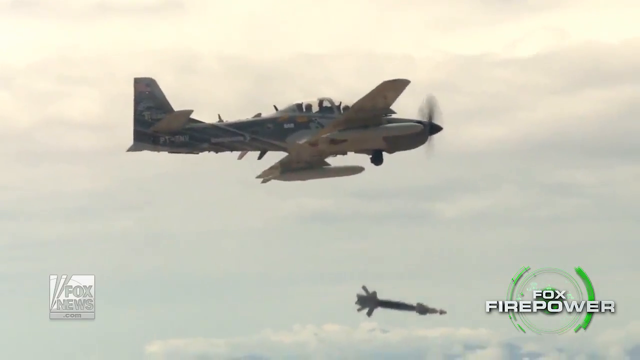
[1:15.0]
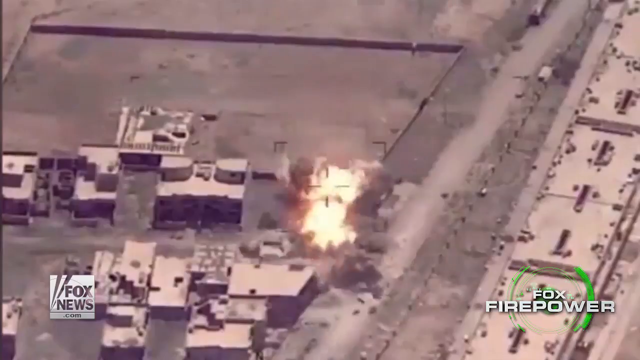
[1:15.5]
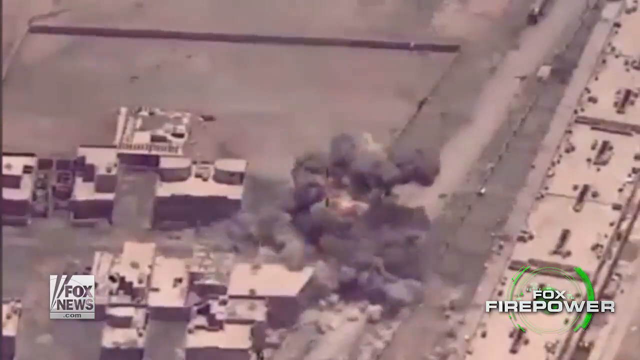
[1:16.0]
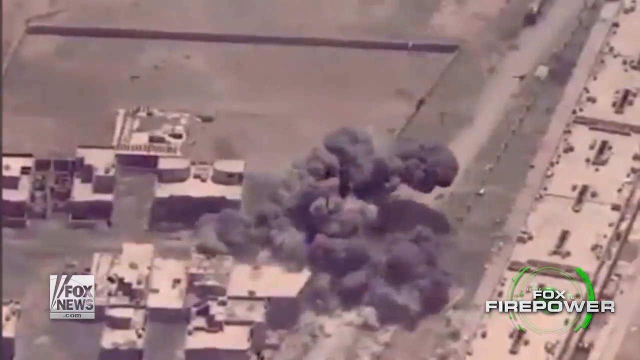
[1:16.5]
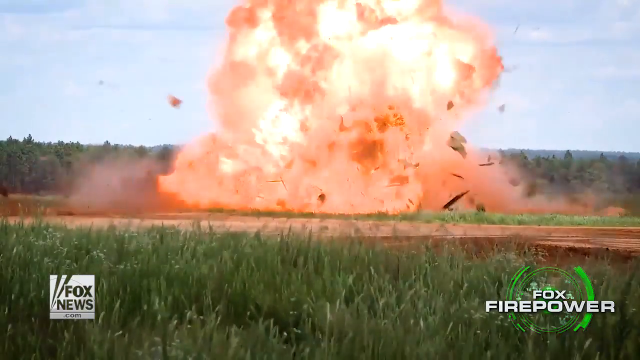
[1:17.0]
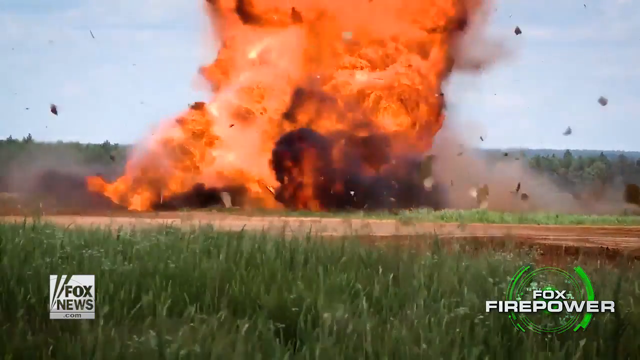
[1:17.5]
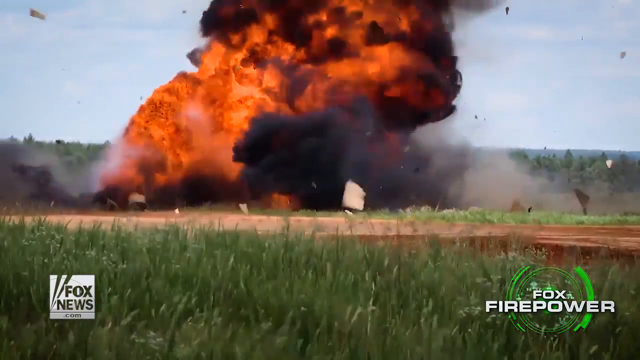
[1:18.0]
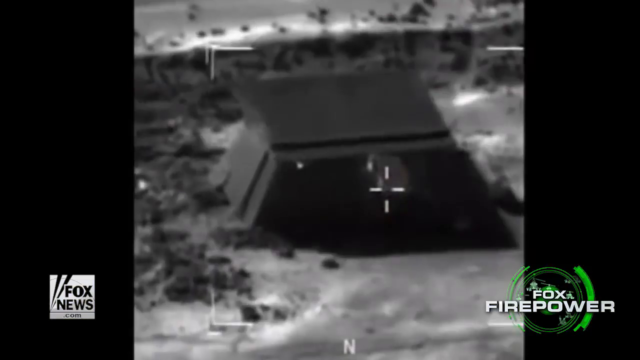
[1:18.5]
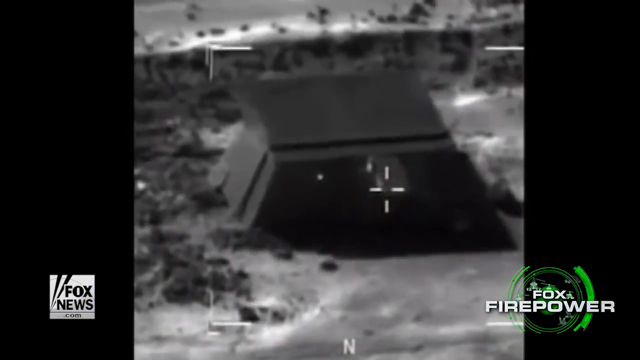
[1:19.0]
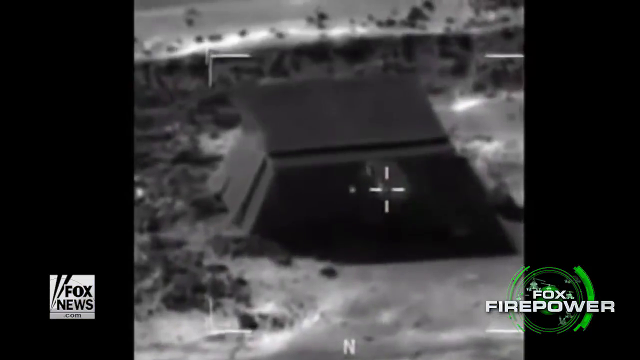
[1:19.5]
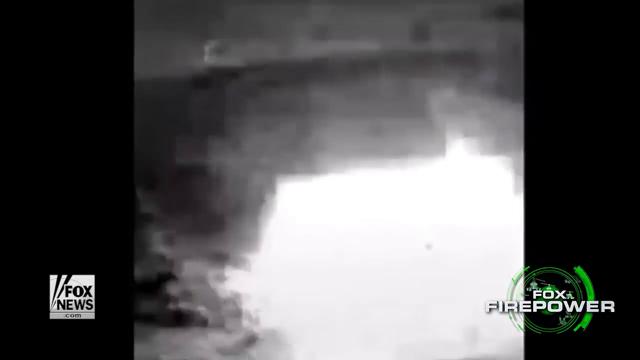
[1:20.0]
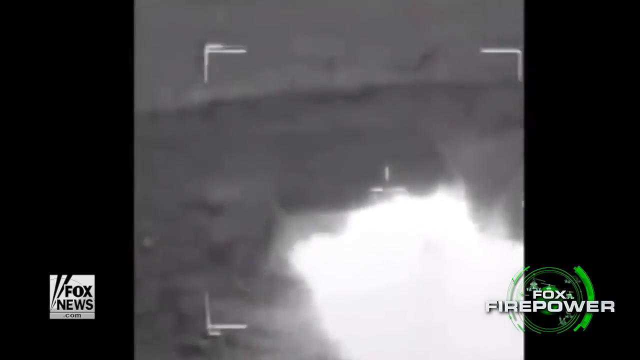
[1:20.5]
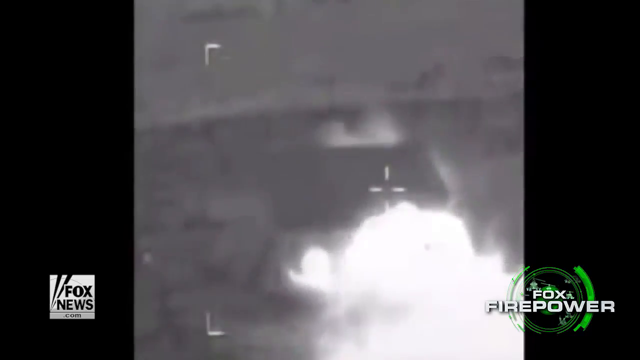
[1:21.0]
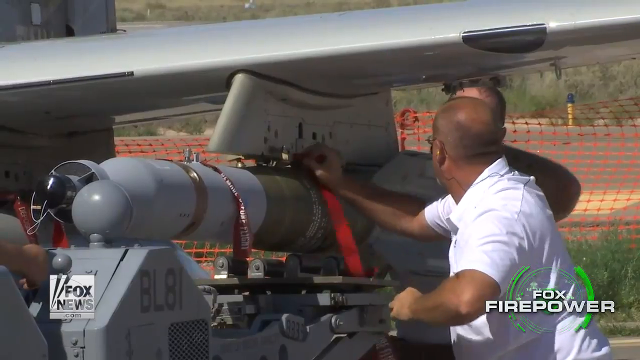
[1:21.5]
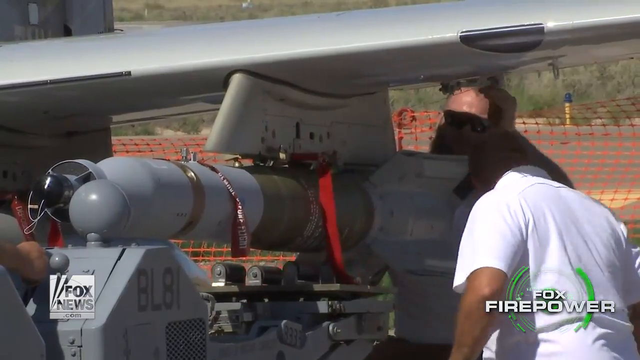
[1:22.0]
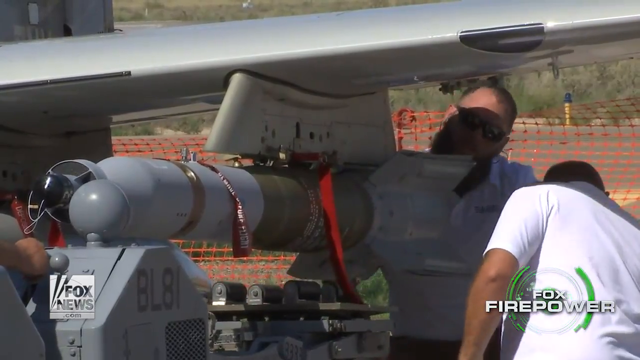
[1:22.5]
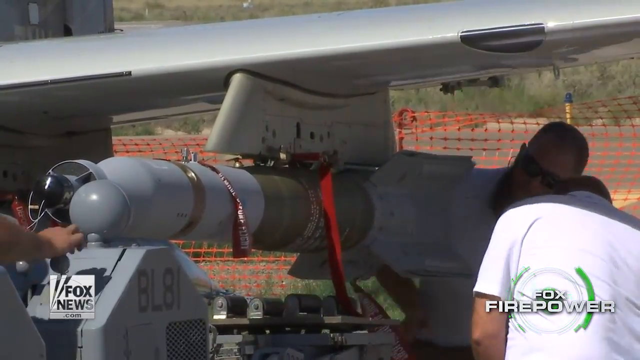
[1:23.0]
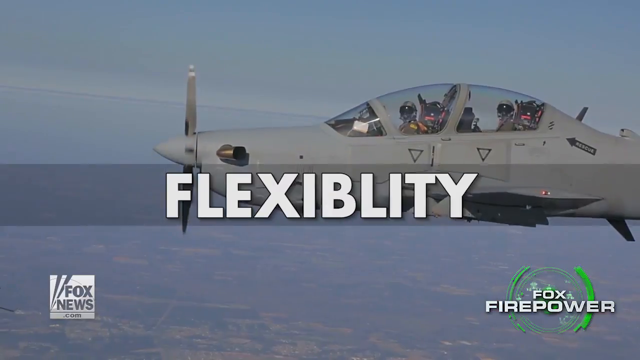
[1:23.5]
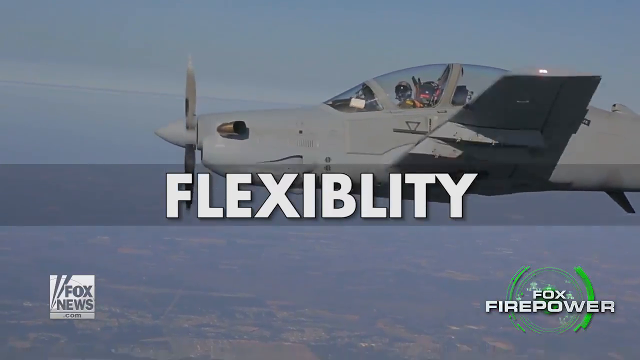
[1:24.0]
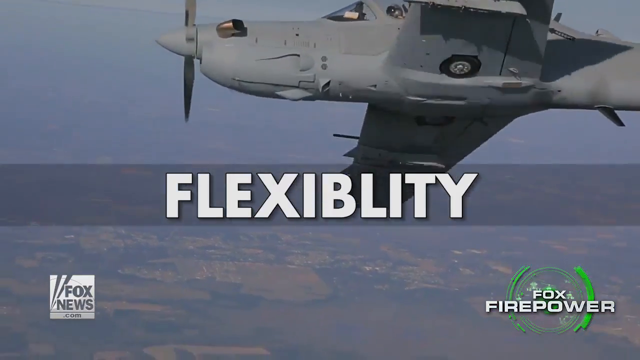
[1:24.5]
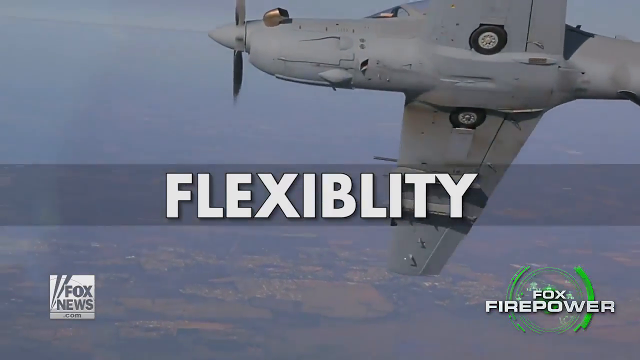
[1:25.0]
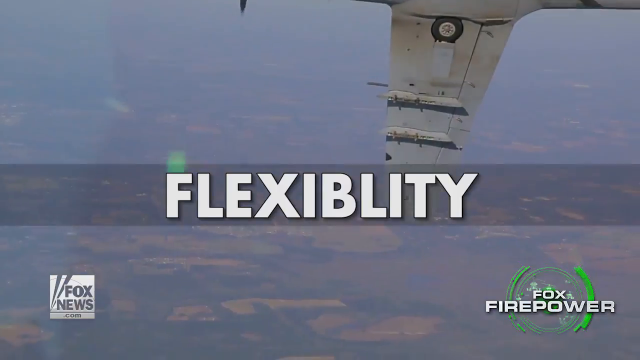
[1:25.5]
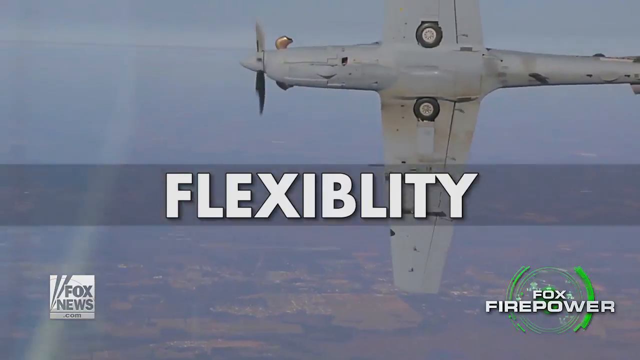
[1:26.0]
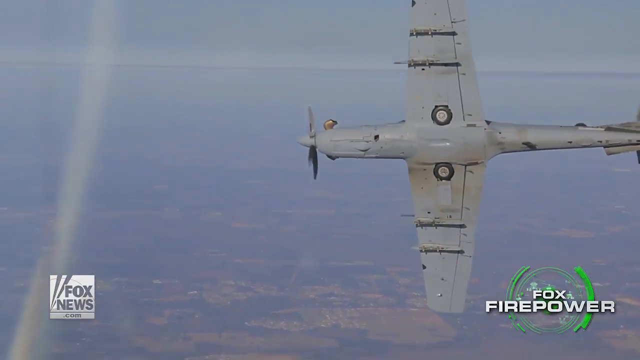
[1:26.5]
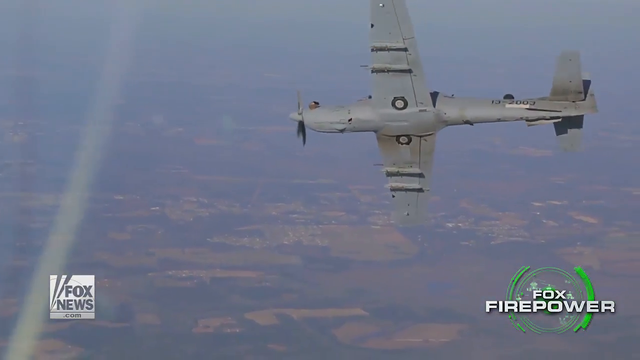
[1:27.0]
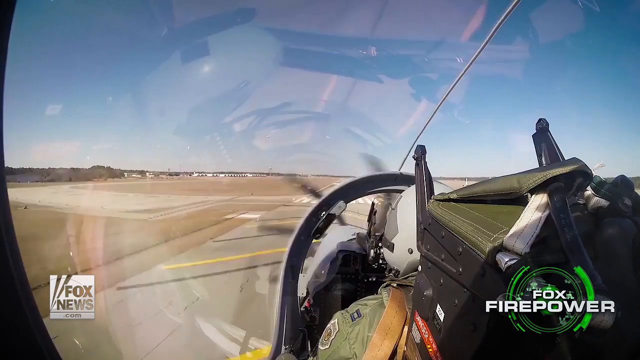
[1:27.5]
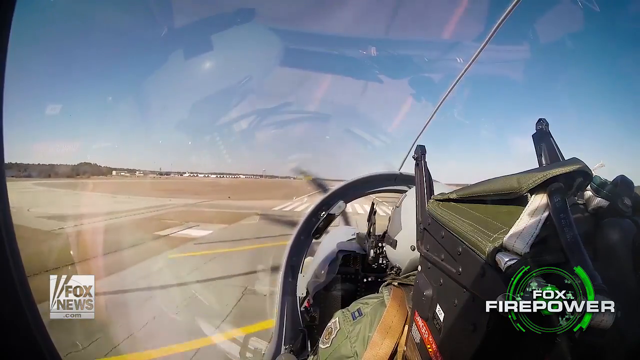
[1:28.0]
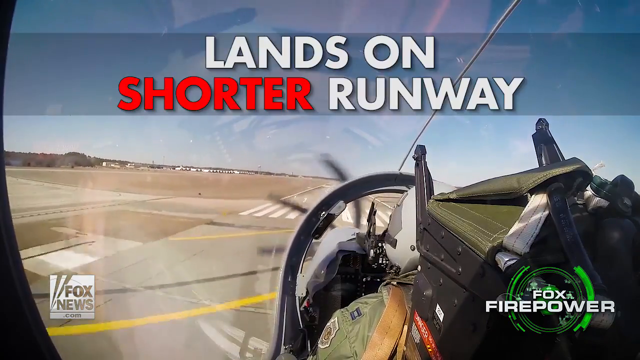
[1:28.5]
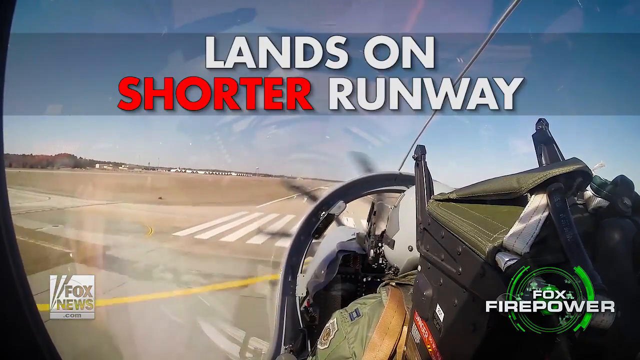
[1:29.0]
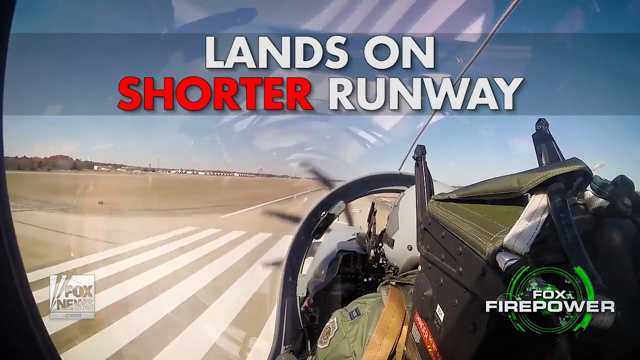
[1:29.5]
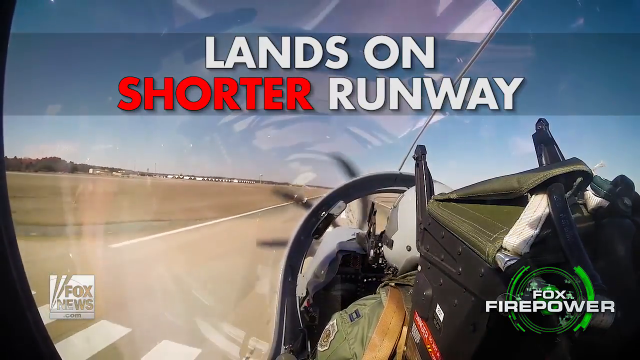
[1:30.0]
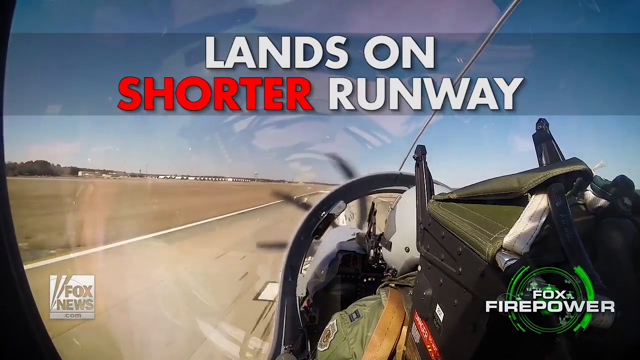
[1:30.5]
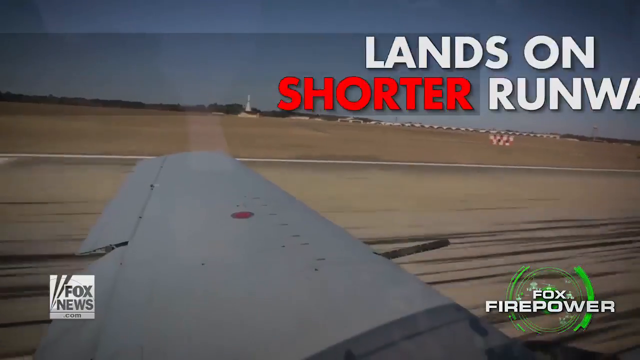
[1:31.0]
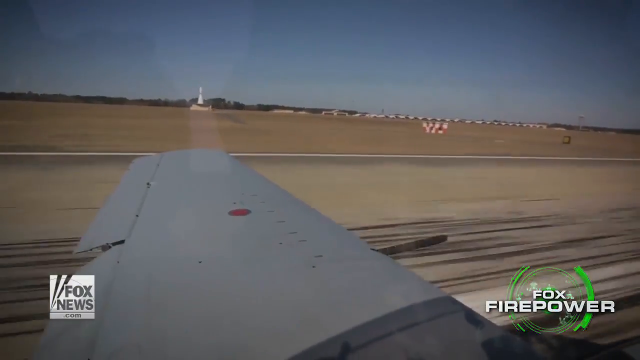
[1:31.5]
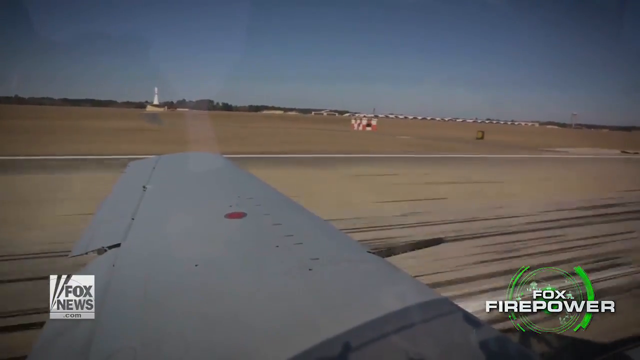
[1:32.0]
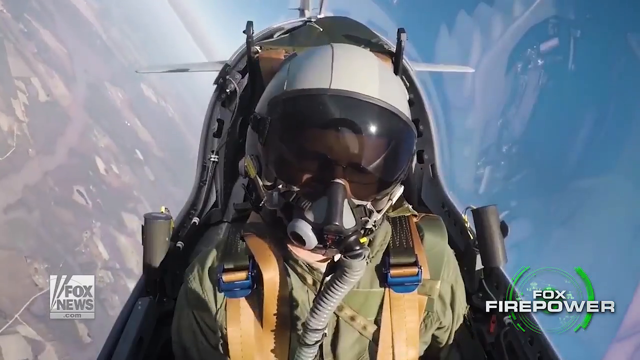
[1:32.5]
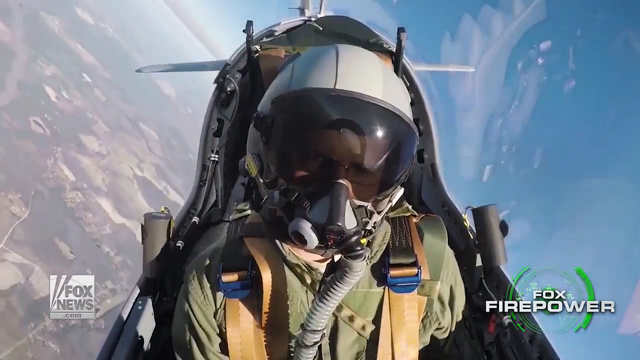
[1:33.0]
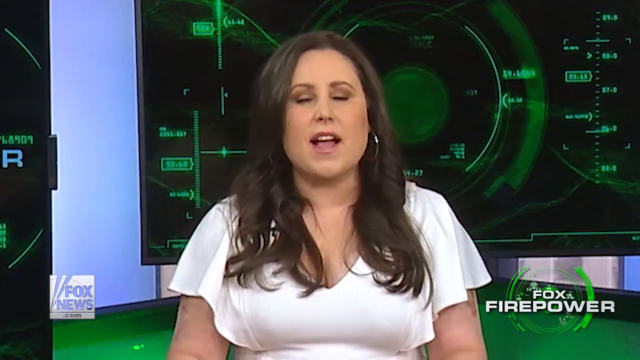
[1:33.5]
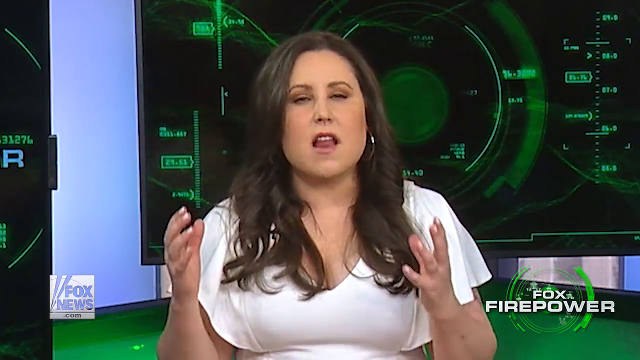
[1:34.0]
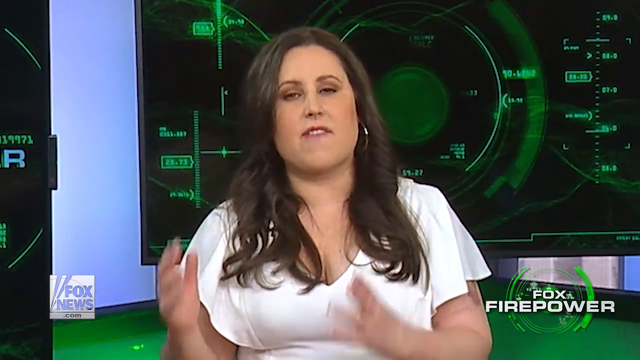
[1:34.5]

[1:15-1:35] The plane moves and drops a missile or bomb on a very small building, and the place explodes and everything blows up. The plane moves away quietly and then lands on a runway. The view moves to the news reporter again as she talks. Afterward, engineers wearing dark shades work together, fixing things on the plane.